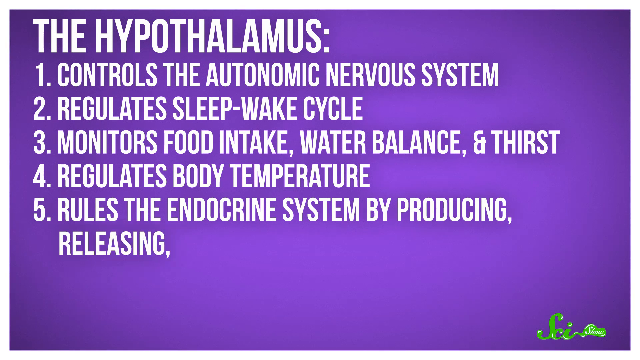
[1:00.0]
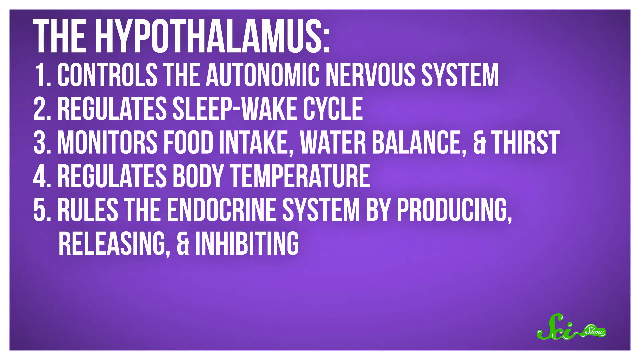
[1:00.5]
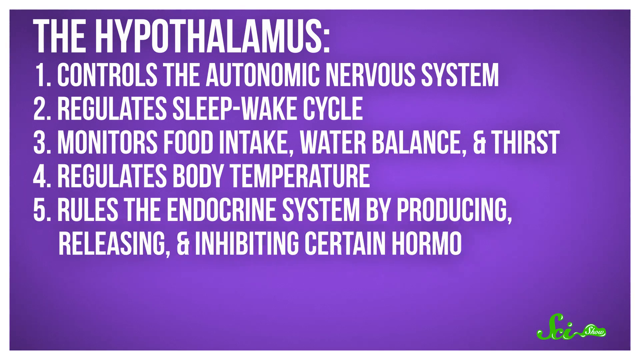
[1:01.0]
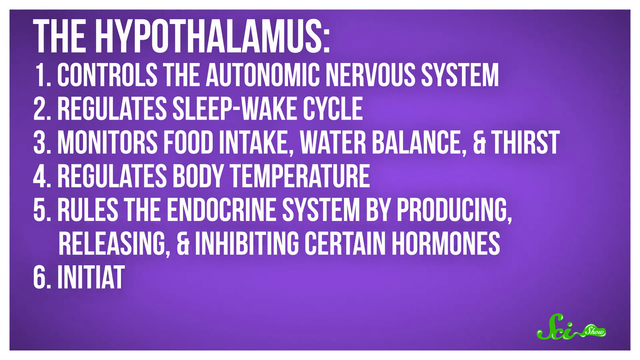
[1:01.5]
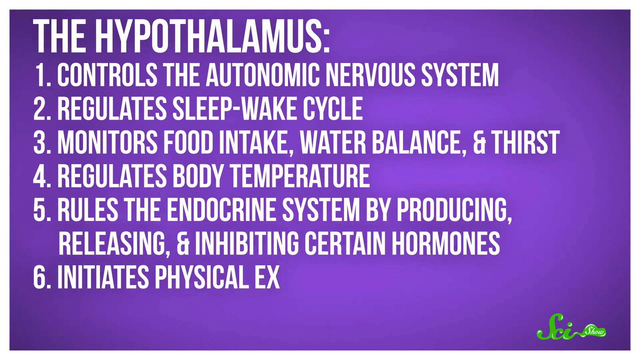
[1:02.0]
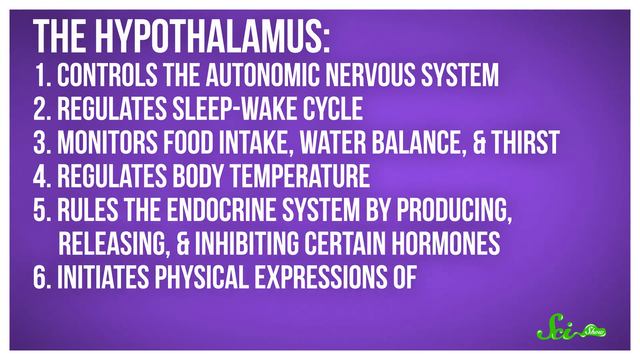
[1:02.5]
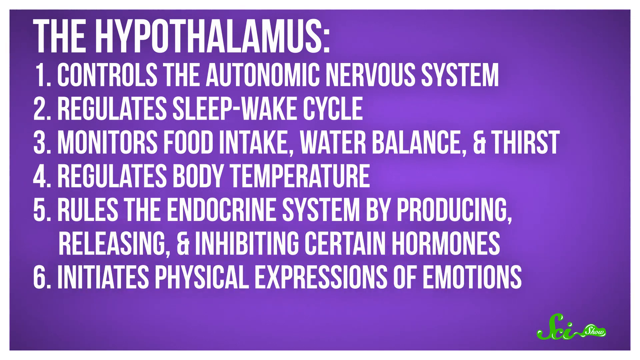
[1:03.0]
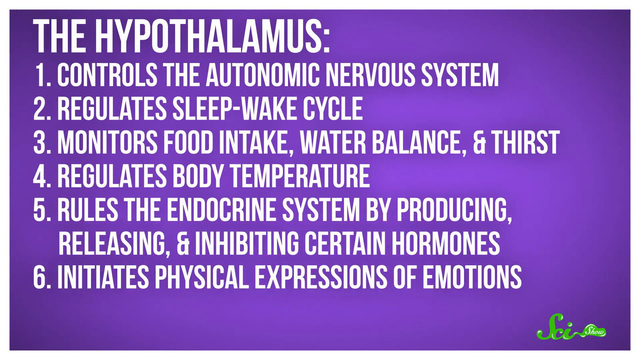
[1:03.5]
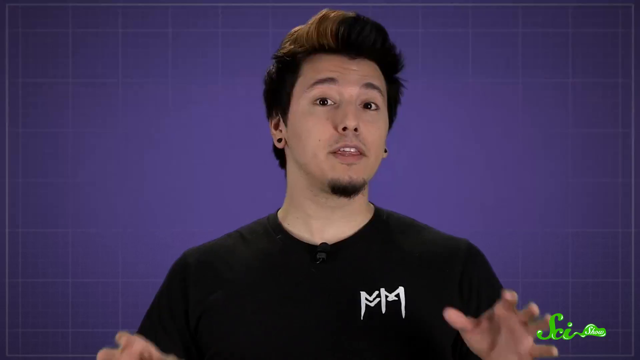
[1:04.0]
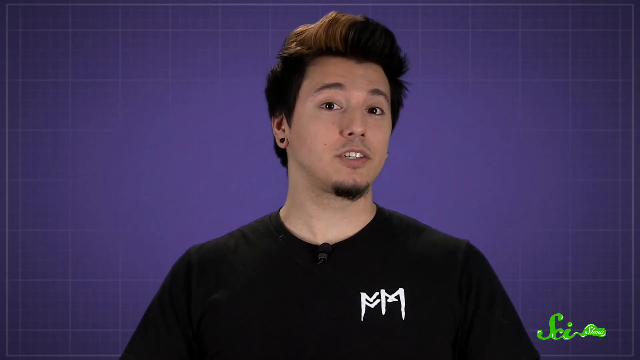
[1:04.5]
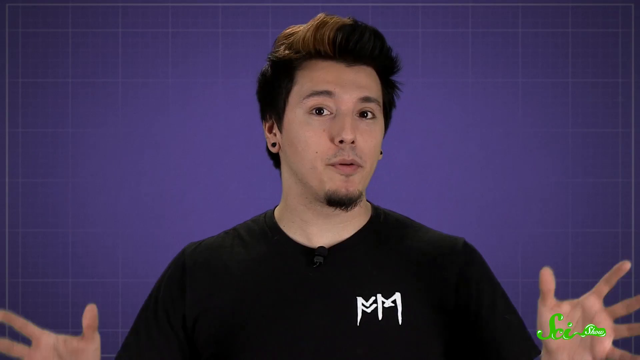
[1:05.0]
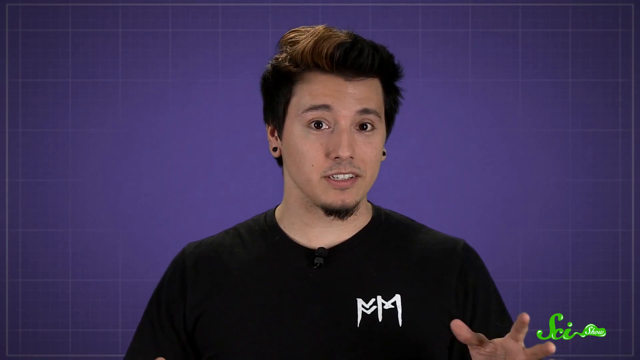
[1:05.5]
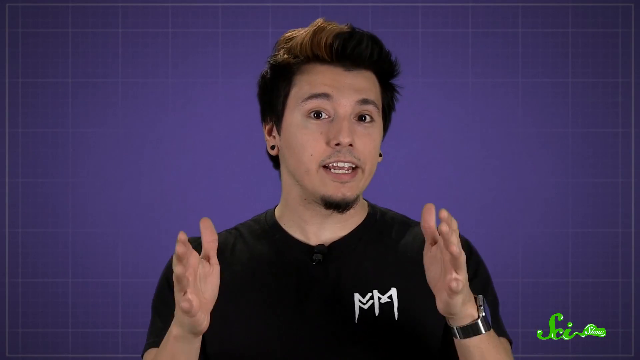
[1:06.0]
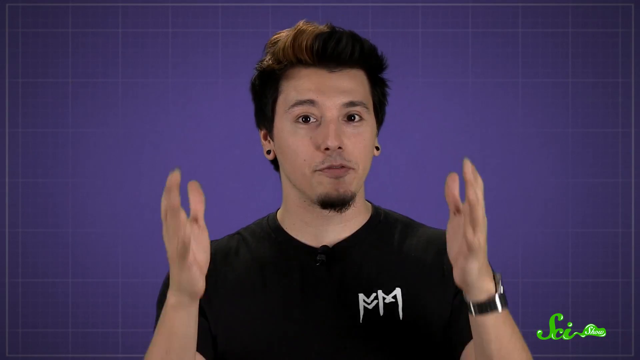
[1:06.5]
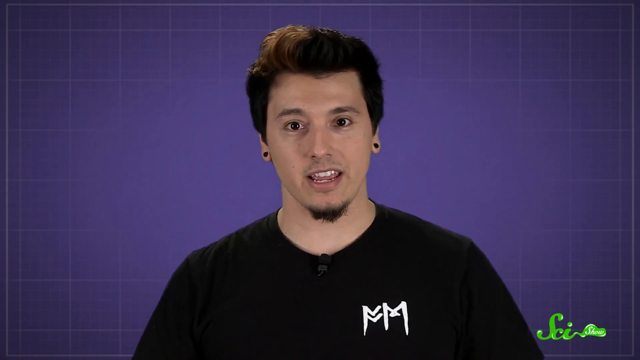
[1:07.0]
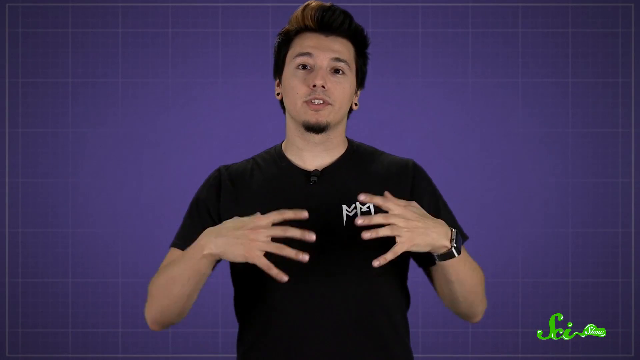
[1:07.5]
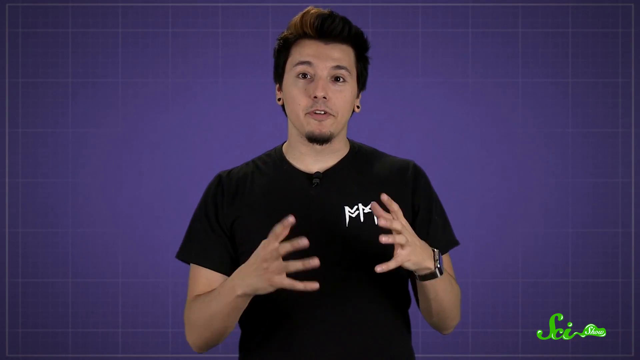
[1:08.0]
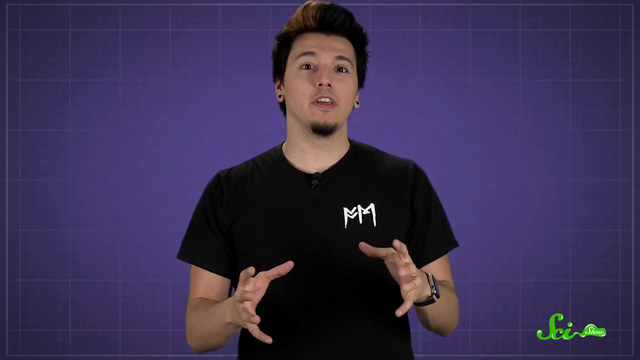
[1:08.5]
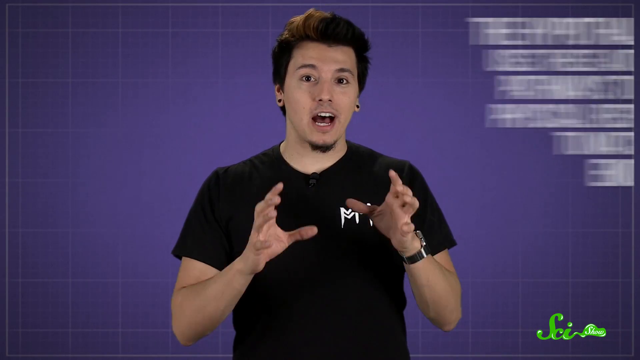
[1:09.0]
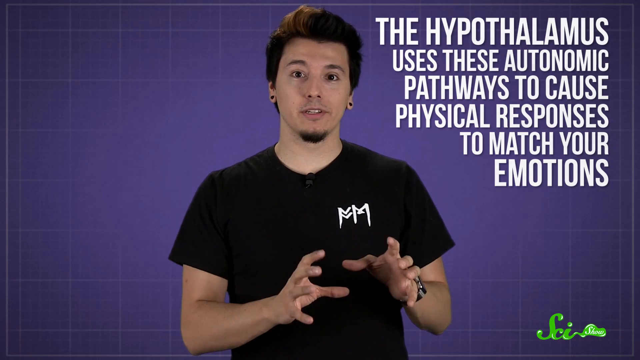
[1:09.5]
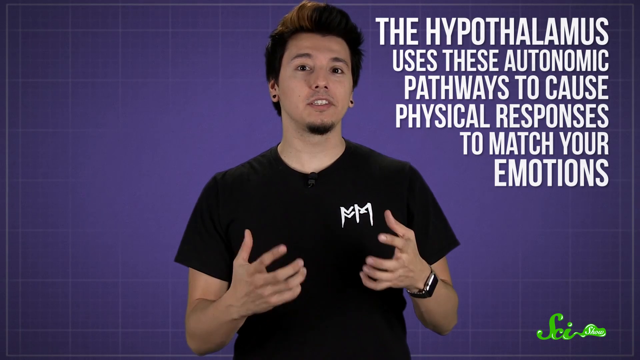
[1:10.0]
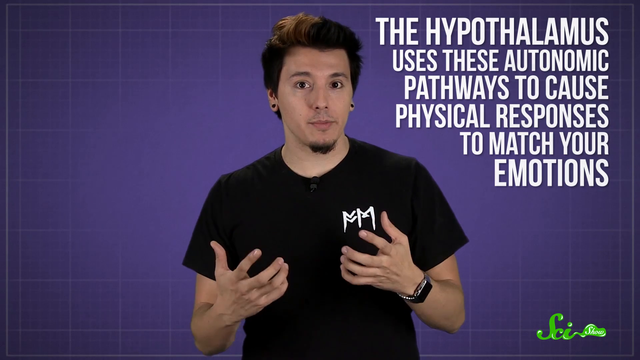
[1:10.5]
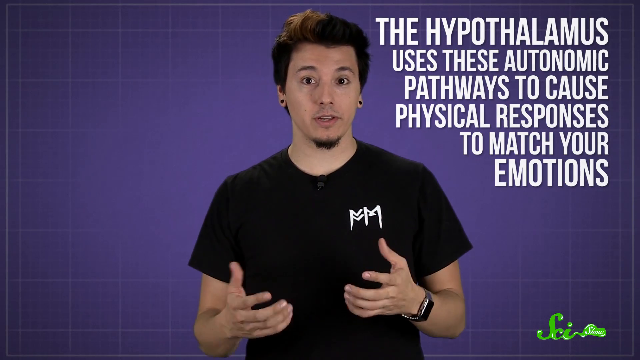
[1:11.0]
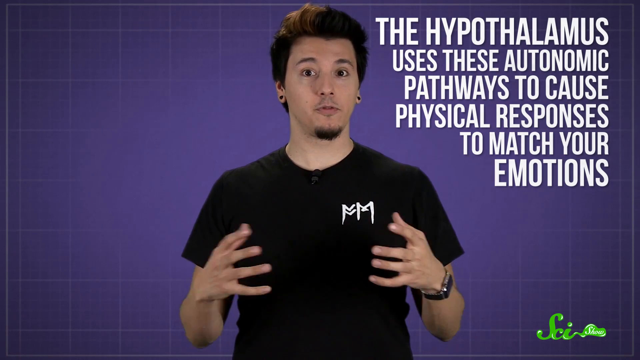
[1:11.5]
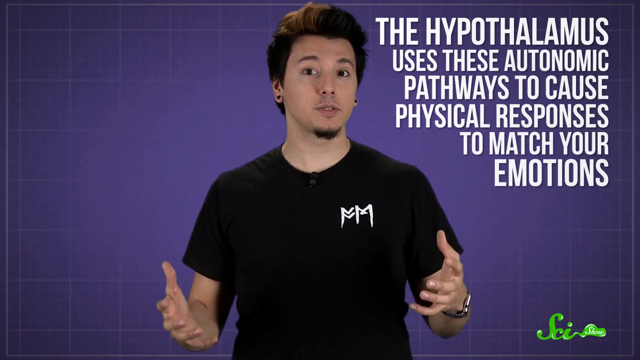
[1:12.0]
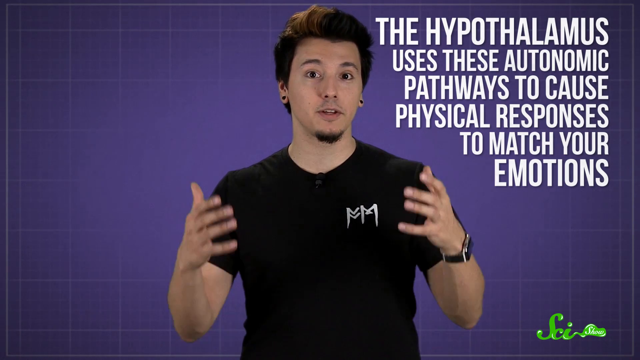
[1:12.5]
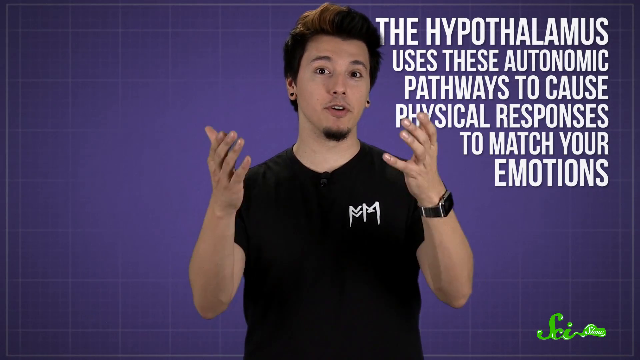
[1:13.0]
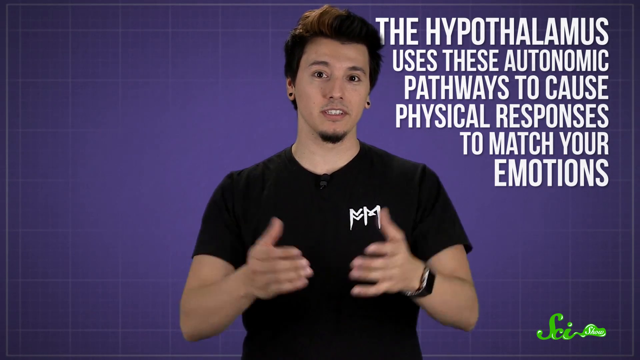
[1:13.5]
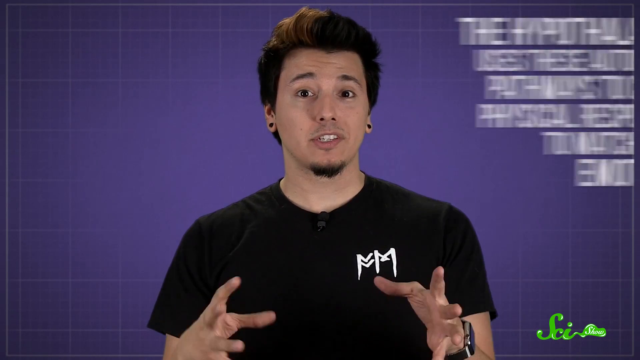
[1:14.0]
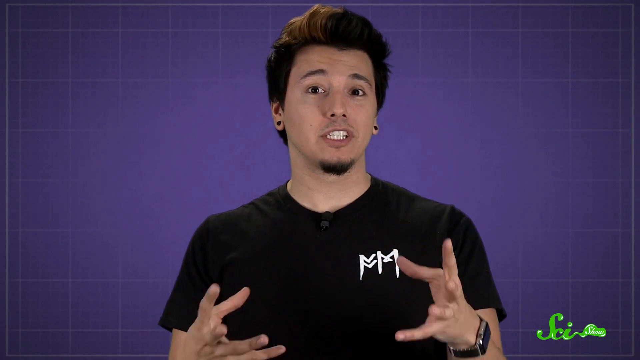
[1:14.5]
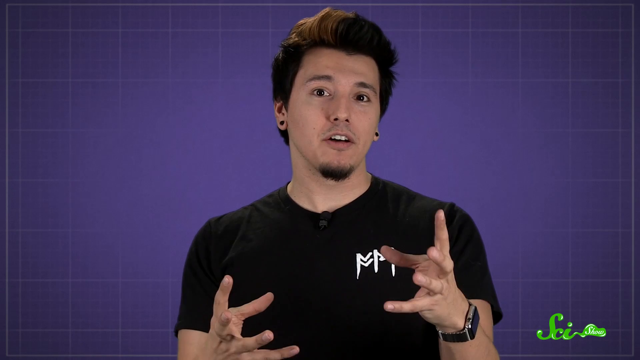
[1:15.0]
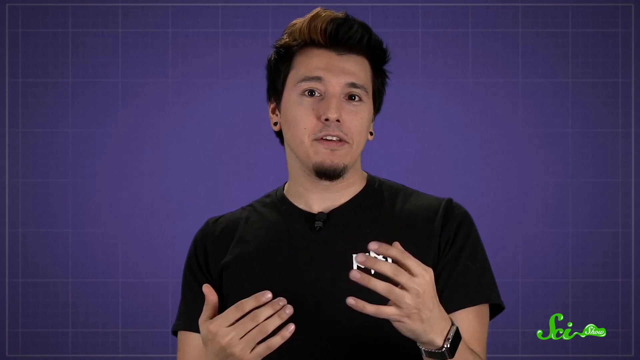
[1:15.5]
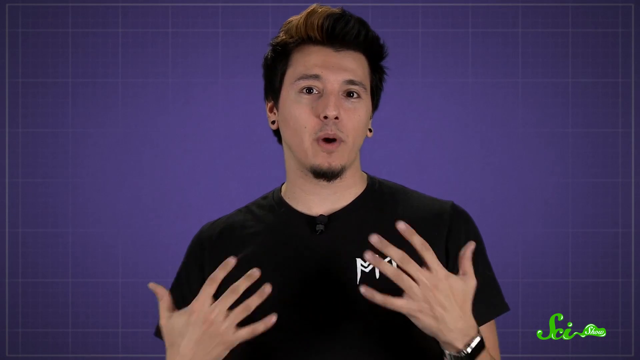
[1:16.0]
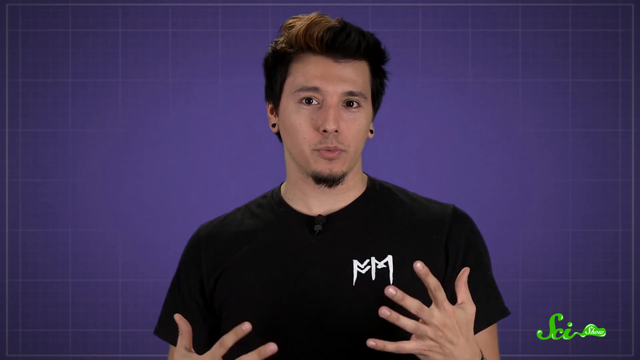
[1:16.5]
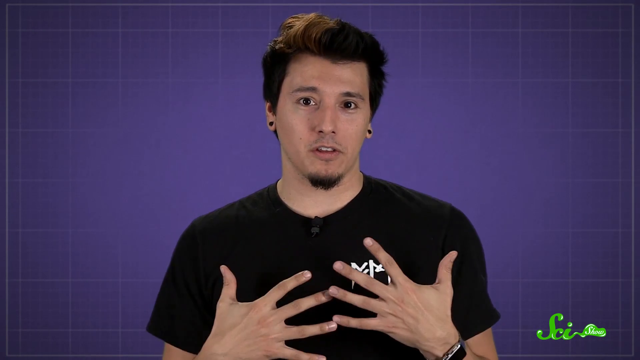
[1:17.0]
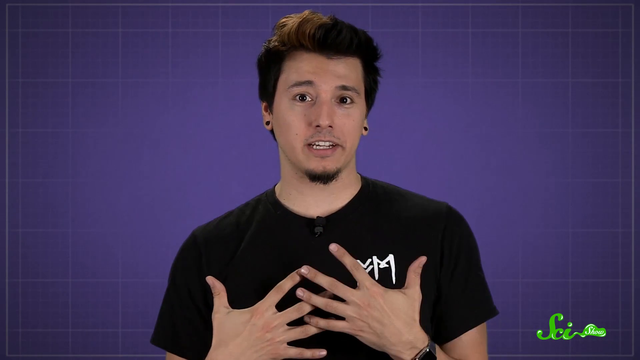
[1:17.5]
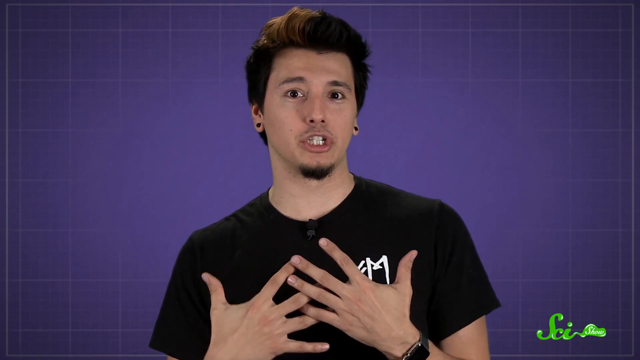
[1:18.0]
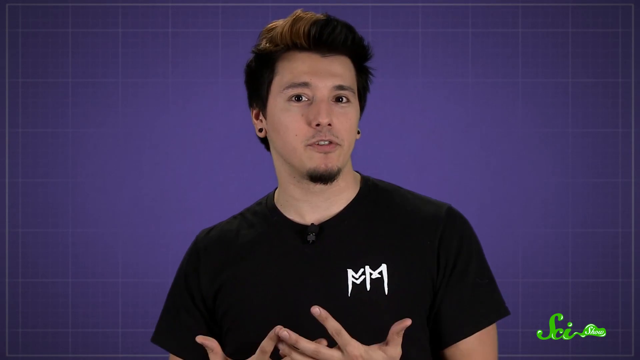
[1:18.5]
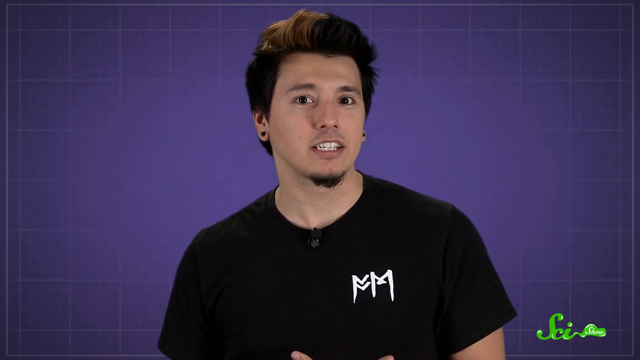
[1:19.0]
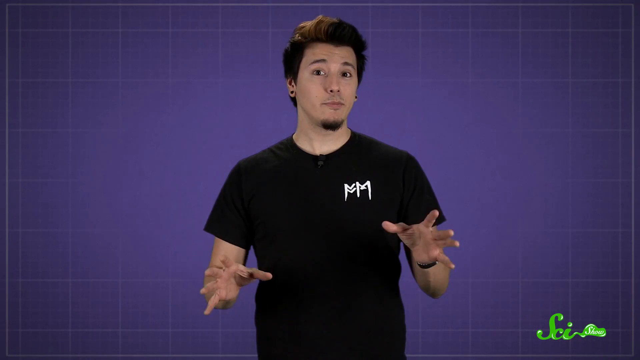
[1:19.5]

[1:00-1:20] A purple screen shows a numbered list in white text under the header "the hypothalamus," written in capital letters. The list reads: "1, controls the autonomic nervous system, 2, regulates sleep-wake cycle, 3, monitors food intake, water balance and thirst, 4, regulates body temperature, 5, rules the endocrine system by producing, releasing and inhibiting certain hormones, 6, initiates physical expressions of emotions." The list then slides upward off the screen to reveal a young man in a black T-shirt speaking passionately and gesturing with his hands. White text slides to the upper right of the screen beside his head, reading "the hypothalamus uses these autonomic pathways to cause physical responses to match your emotions." The young man continues speaking as the text slides off the right side of the screen in an animated transition.